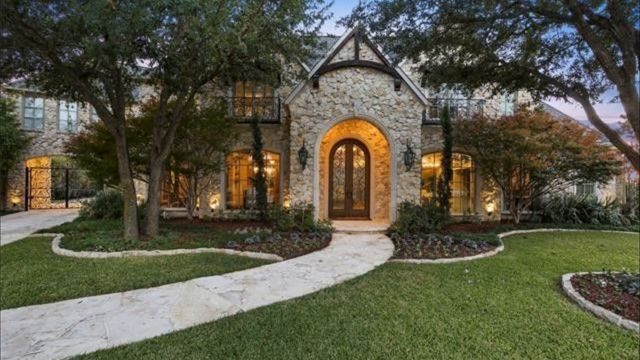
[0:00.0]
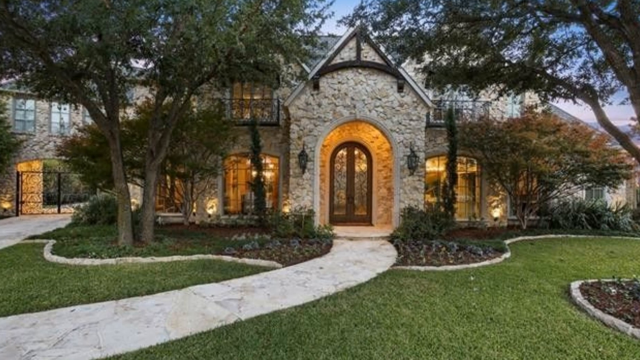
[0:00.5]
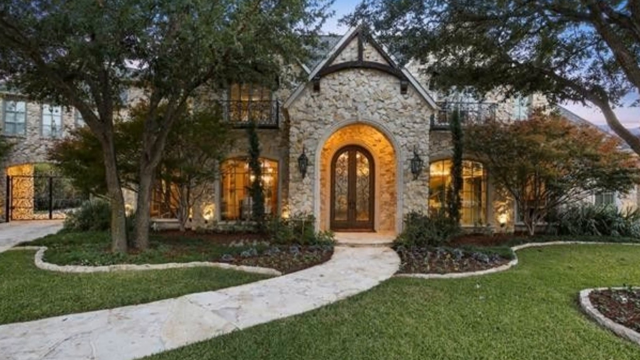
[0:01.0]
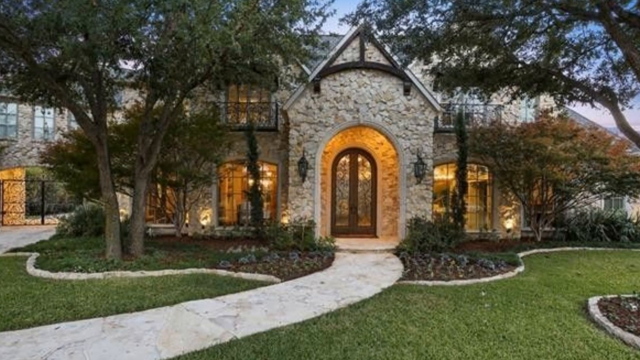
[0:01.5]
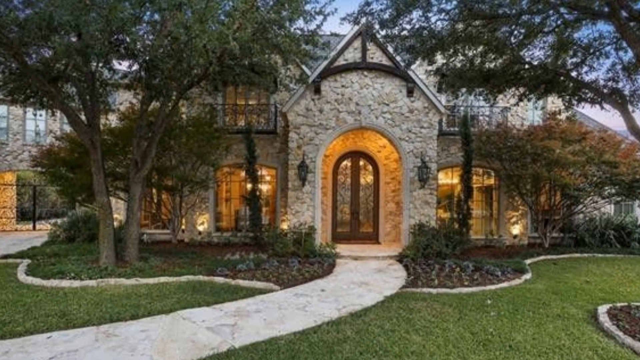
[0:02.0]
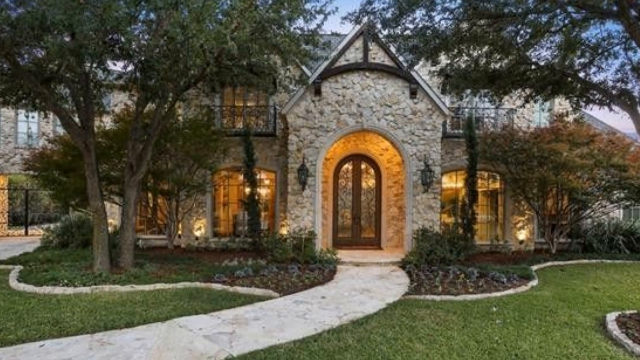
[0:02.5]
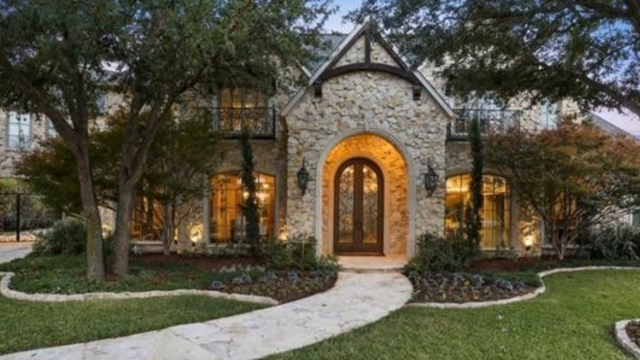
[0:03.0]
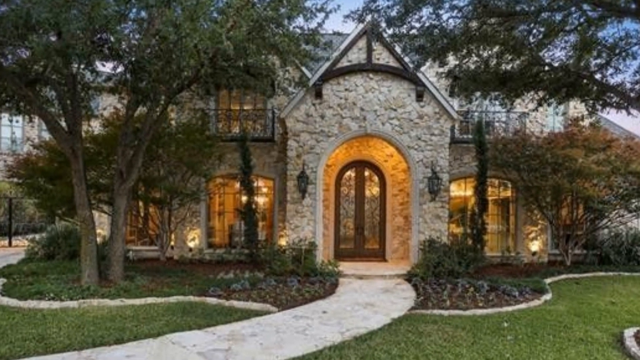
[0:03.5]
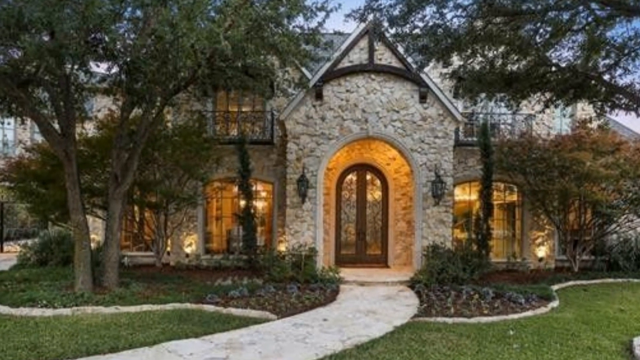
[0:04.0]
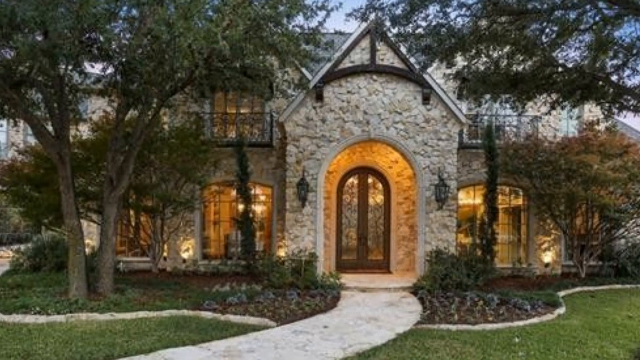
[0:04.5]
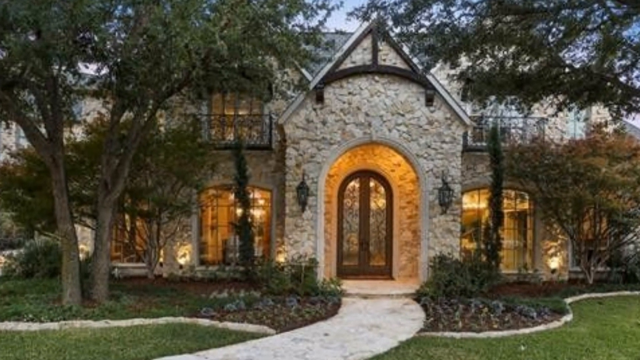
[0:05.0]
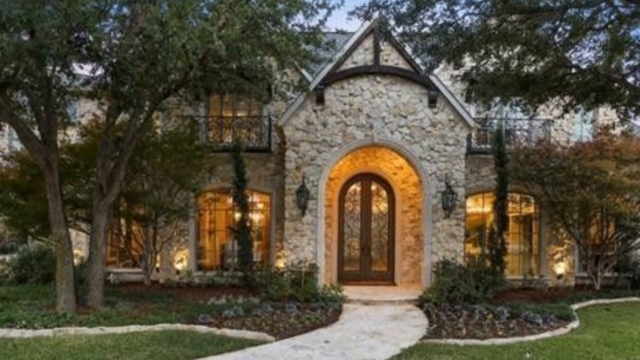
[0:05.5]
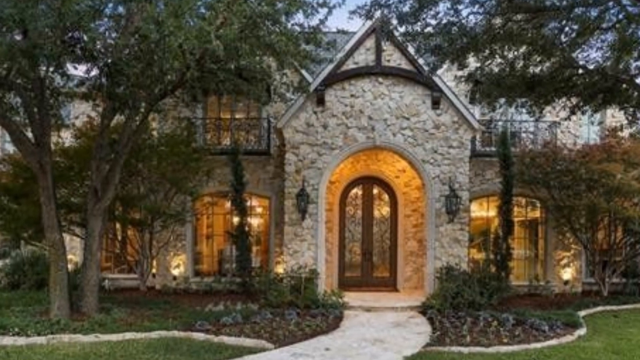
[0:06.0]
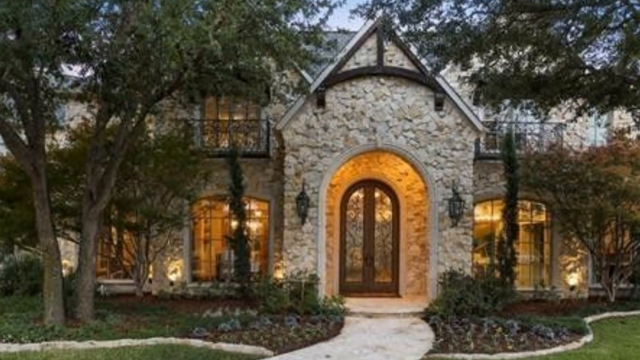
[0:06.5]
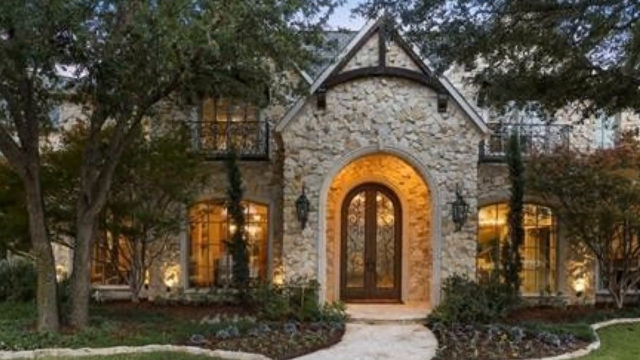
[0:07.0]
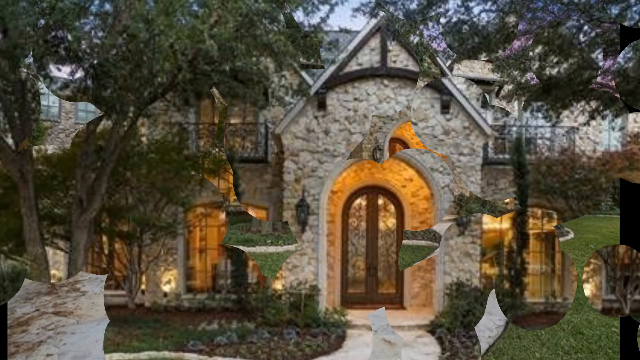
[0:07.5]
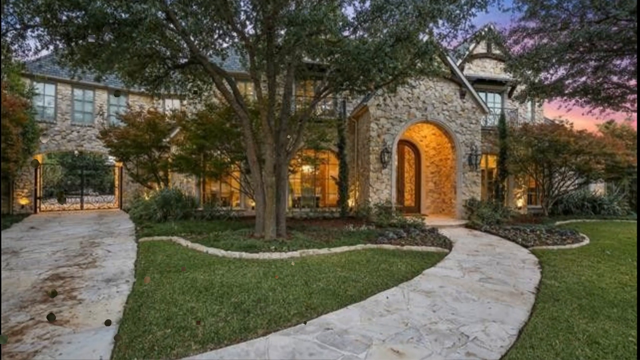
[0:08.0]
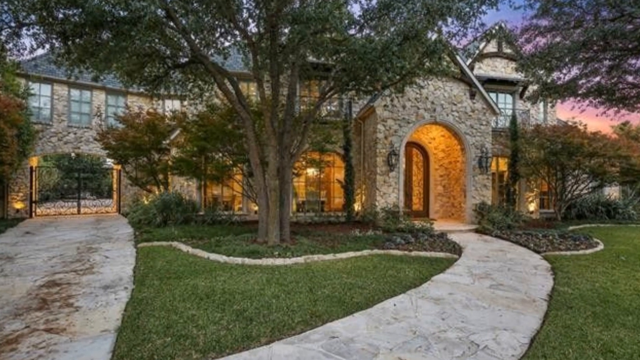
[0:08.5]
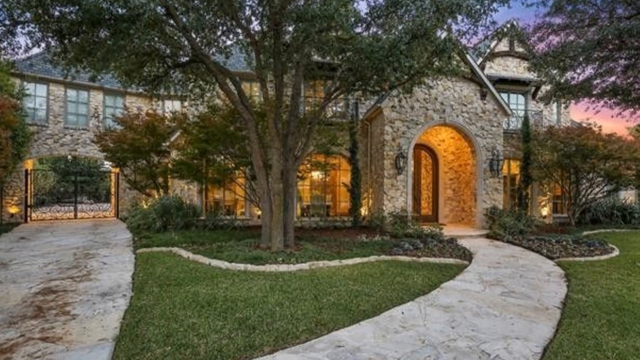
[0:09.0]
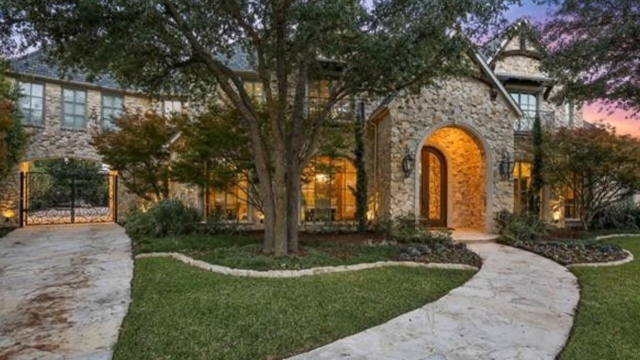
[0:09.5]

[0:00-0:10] A rather nice-looking house is shown as the camera zooms in toward its front entrance and front door. It is a stone building with a garden and a winding stone path leading to the front door. The camera slowly moves in and somewhat upward, aiming toward the second floor. There are a lot of trees, the space is very open, and the house looks very large. Little of the surroundings is visible during the zoom until the very end, when a bit more of the left side comes into view. There also appears to be a driveway and a gate.